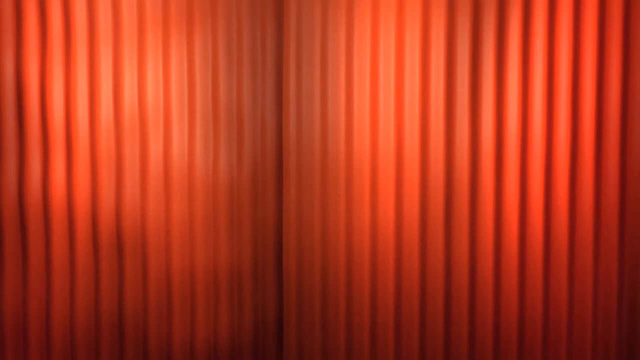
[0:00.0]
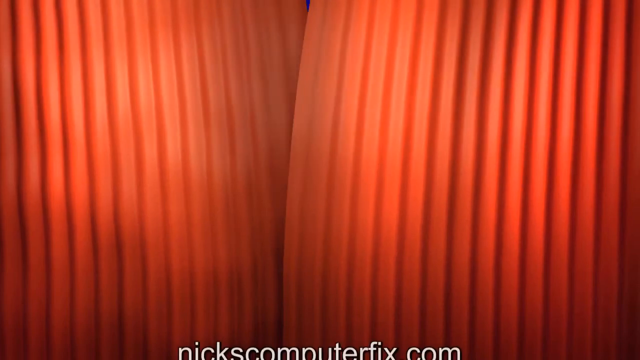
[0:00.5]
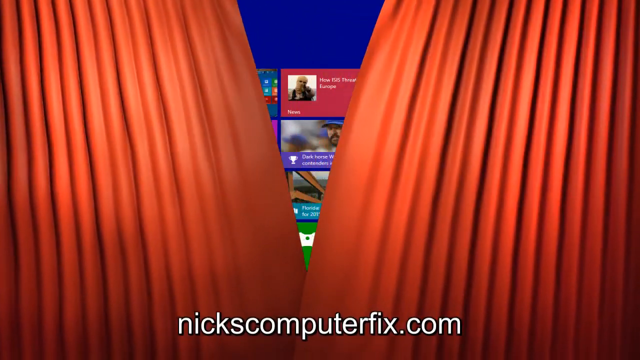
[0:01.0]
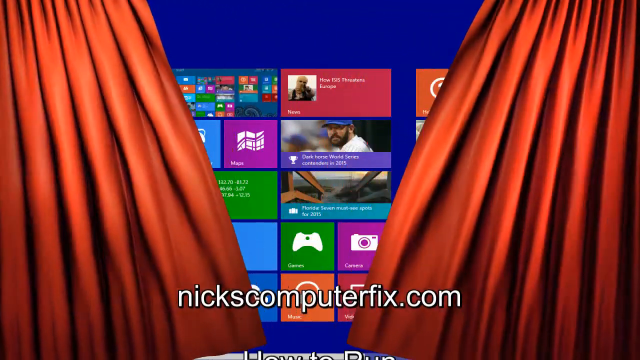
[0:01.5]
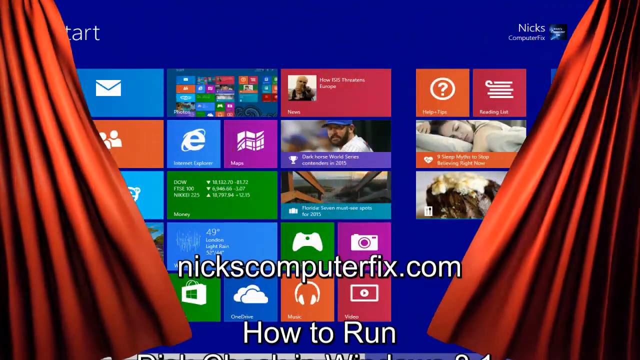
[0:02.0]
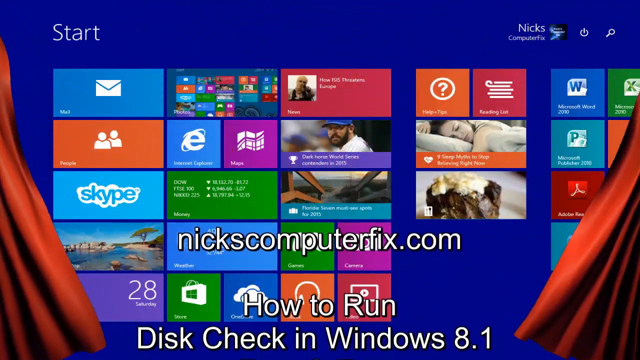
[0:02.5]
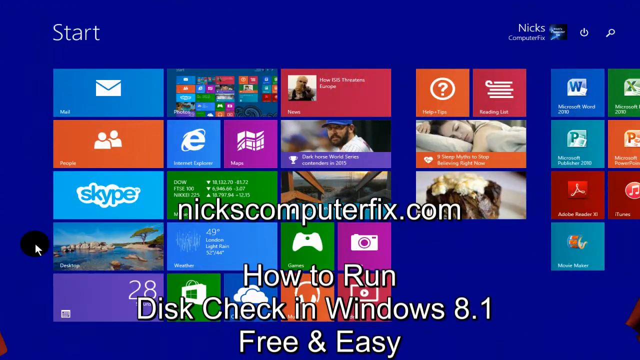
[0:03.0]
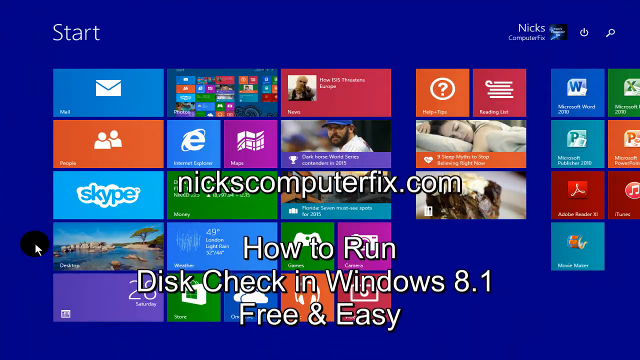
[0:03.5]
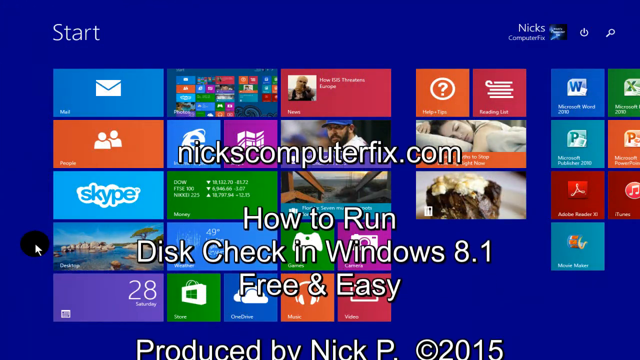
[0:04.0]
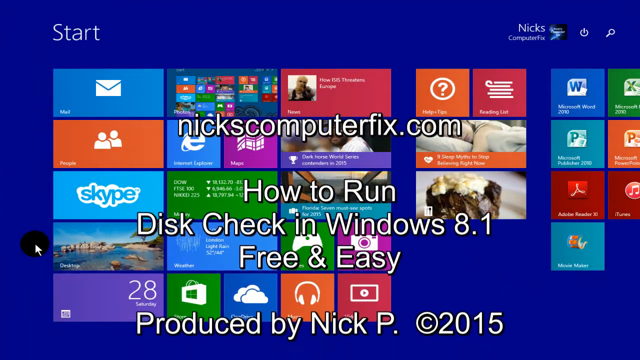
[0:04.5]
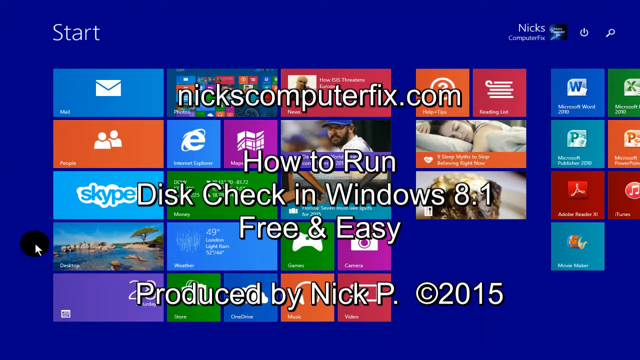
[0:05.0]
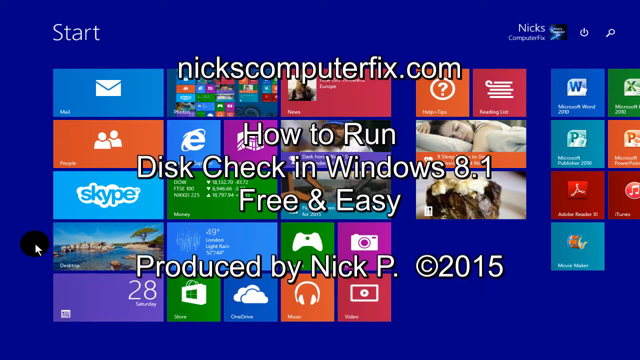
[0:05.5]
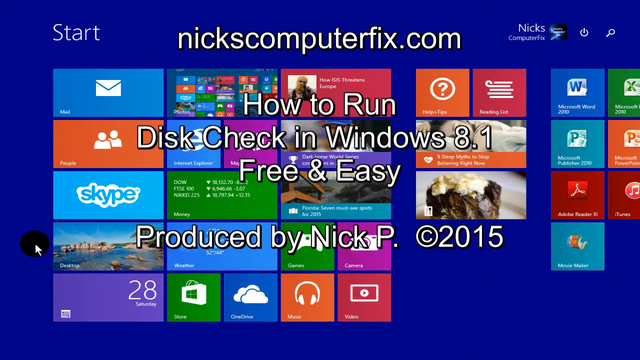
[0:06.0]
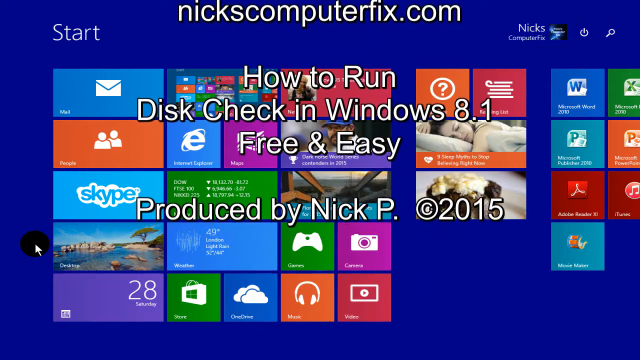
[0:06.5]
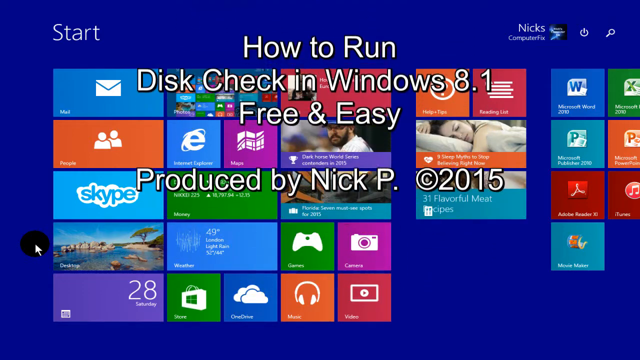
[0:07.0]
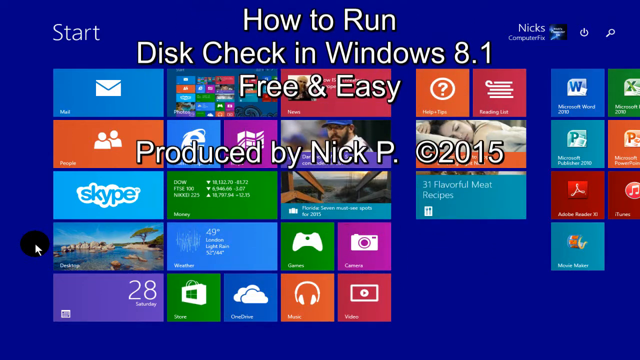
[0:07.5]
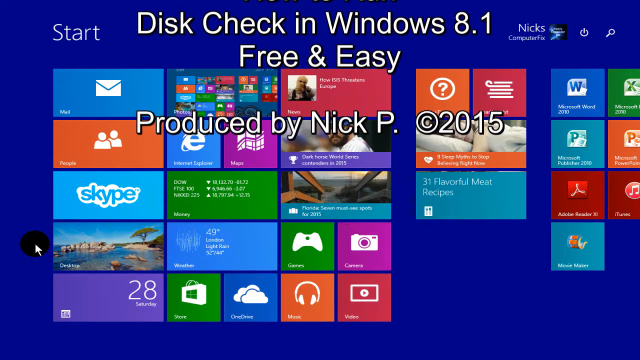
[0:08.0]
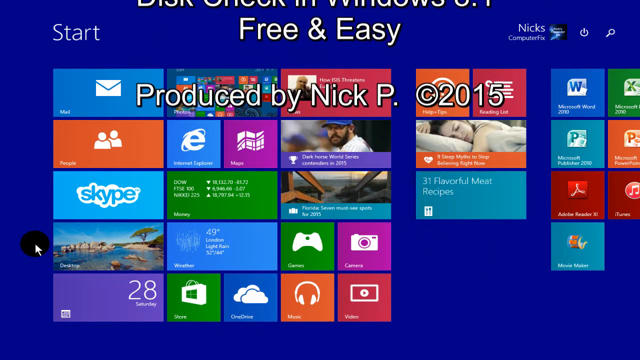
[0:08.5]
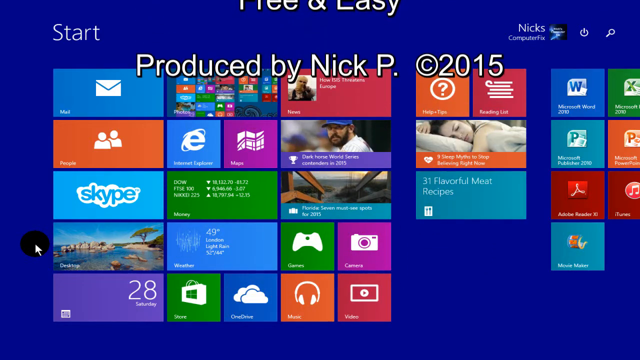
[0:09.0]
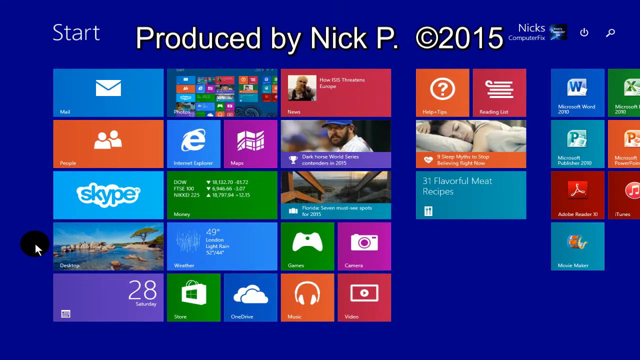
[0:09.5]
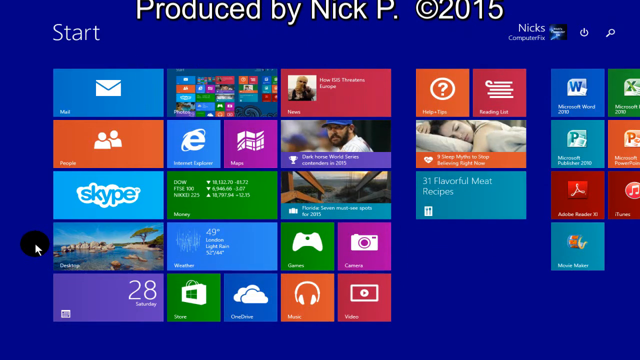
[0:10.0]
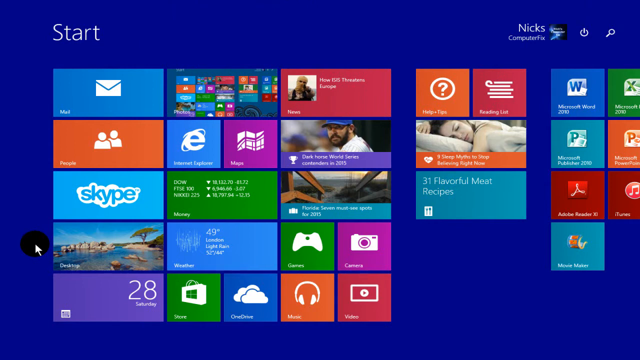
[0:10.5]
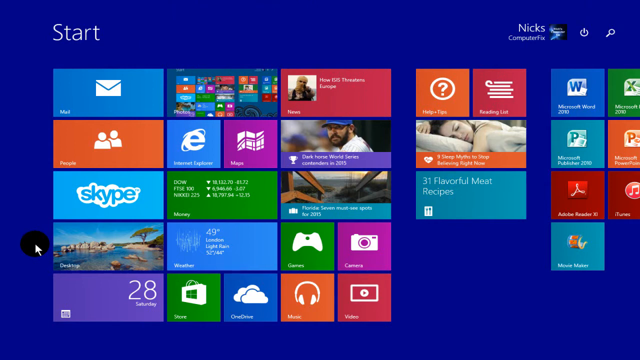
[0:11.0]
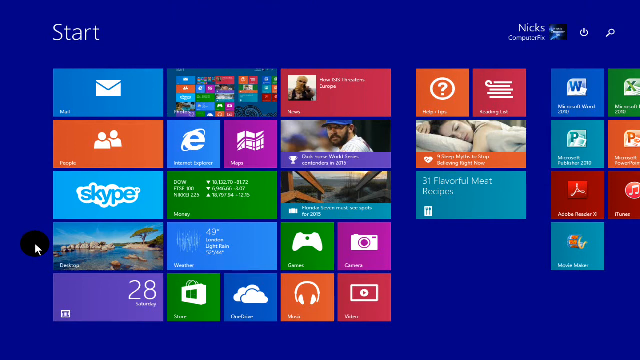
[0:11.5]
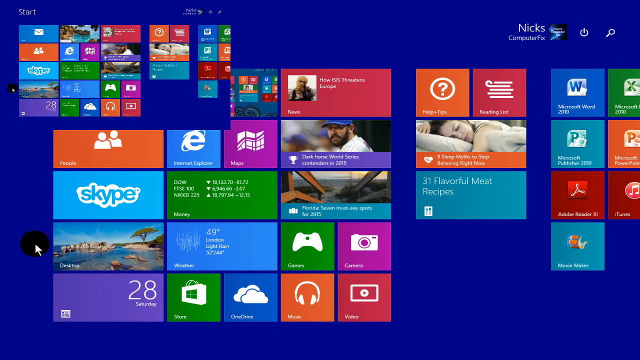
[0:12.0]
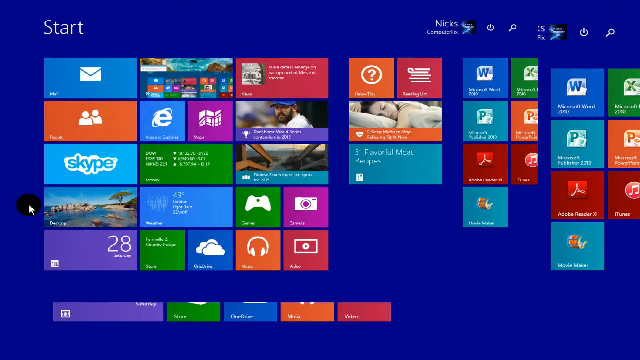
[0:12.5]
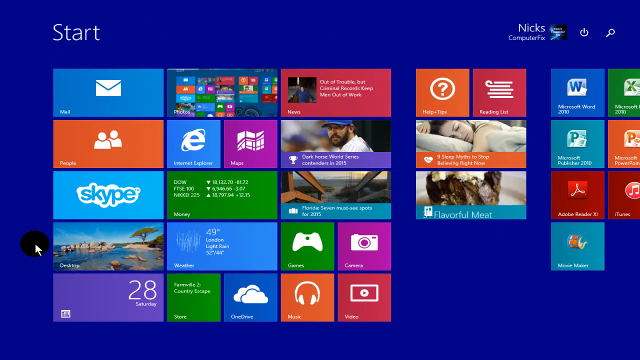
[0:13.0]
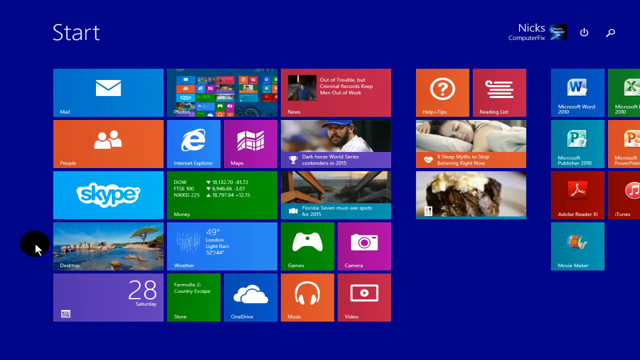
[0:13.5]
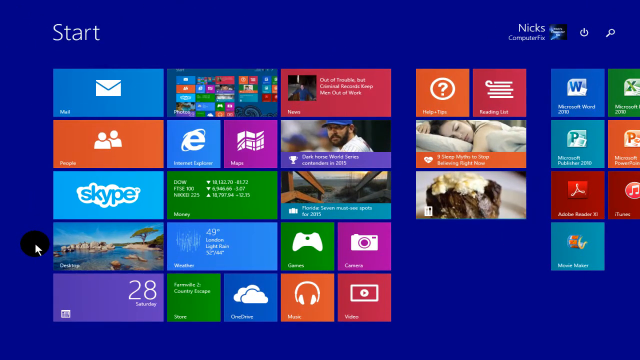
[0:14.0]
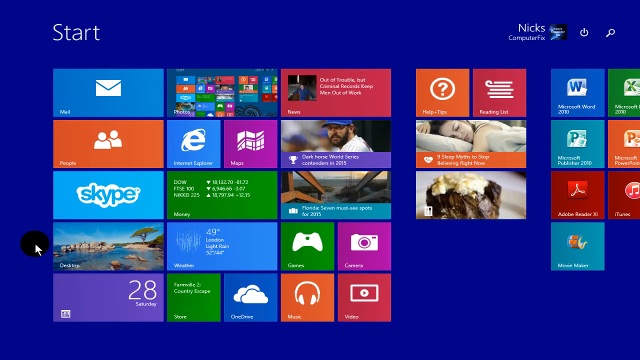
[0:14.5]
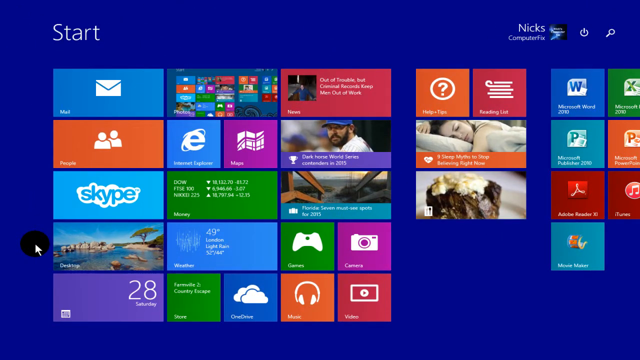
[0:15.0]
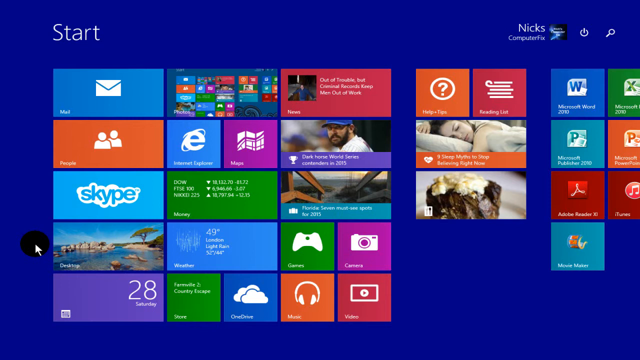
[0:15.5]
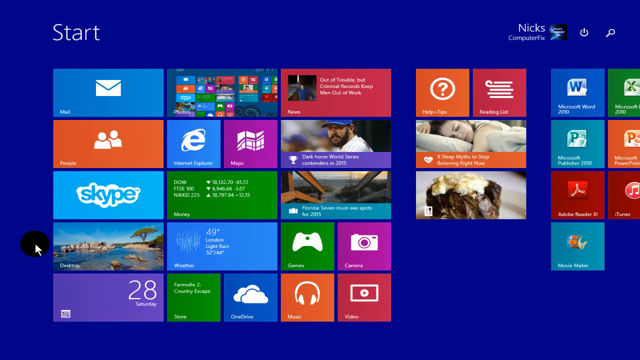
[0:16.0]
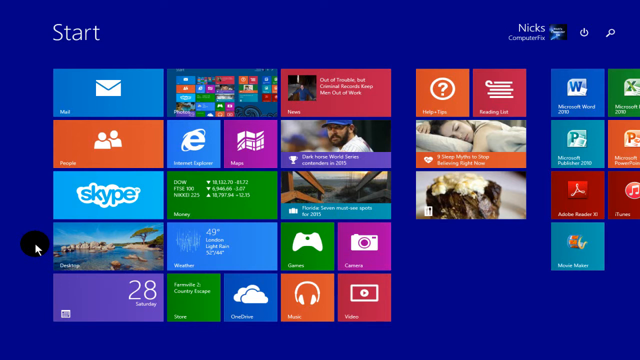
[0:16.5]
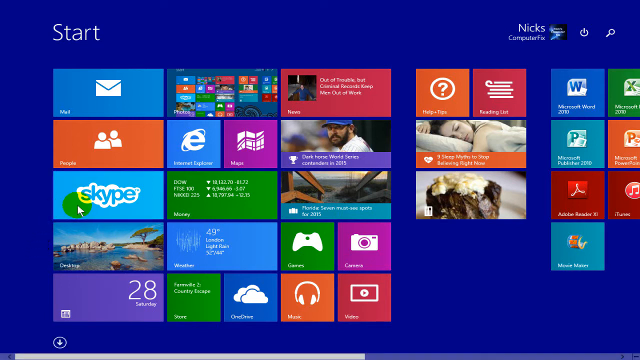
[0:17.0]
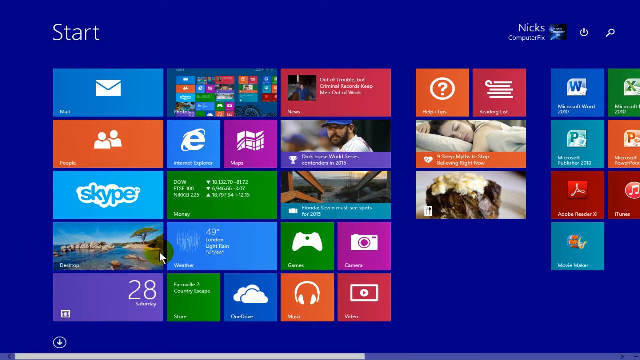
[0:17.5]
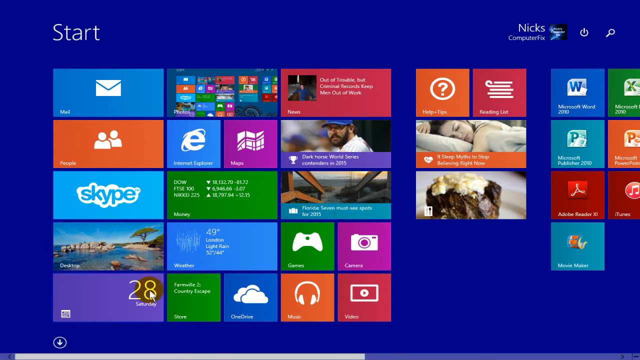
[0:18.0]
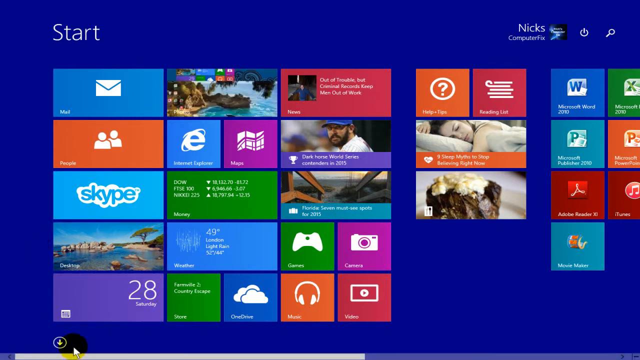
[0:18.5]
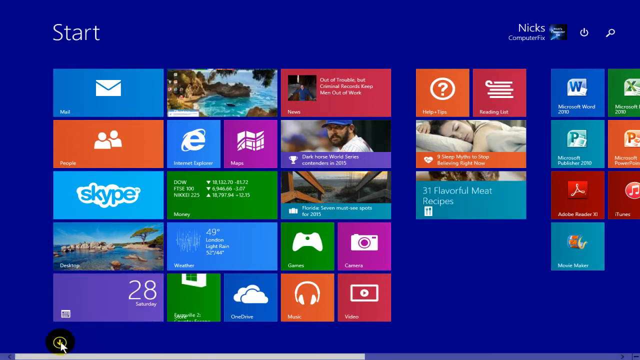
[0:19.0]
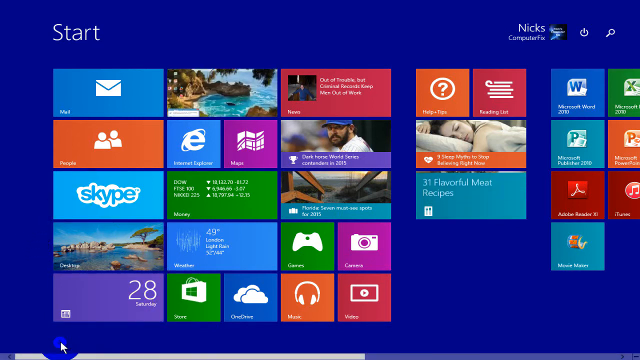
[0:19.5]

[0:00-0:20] A Windows 8.1 desktop is being recorded or broadcast on the screen. Text scrolls up the screen from the bottom to the top, reading "NixComputerFix.com How to Run Disk Check in Windows 8.1 Free and Easy. Produced by Nick P. 2015." It is an explainer video on how to run a disk check on the Windows 8.1 operating system. The person's screen recorder is running, and their mouse movements are visible as they move the pointer around the screen to select the options that begin the disk check. The desktop holds a number of familiar programs: the Mail app, the People app, Skype, Microsoft Word, Adobe Acrobat, a music player, OneDrive, the video player, and several other apps.